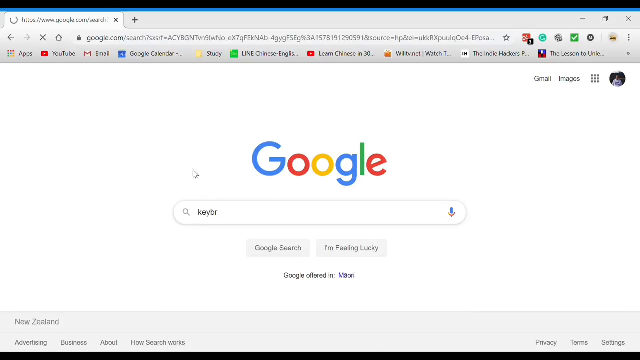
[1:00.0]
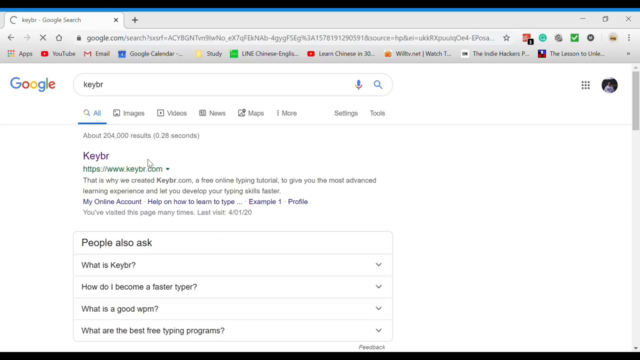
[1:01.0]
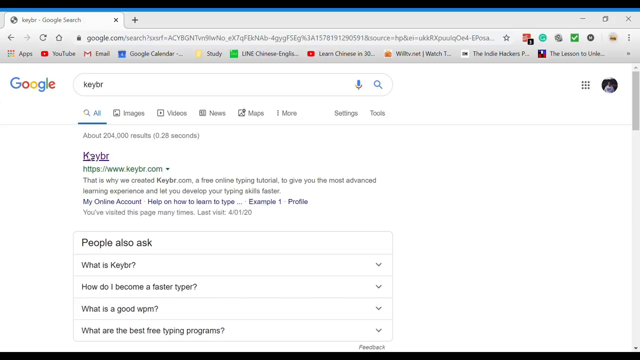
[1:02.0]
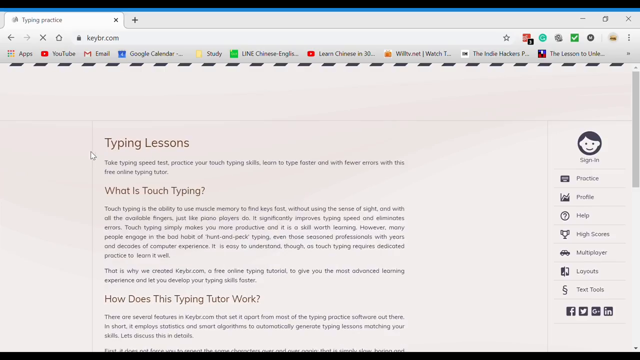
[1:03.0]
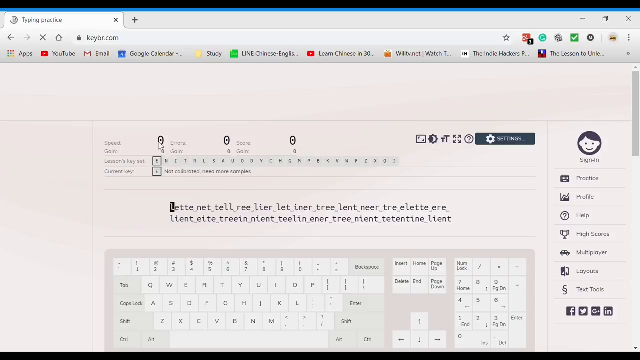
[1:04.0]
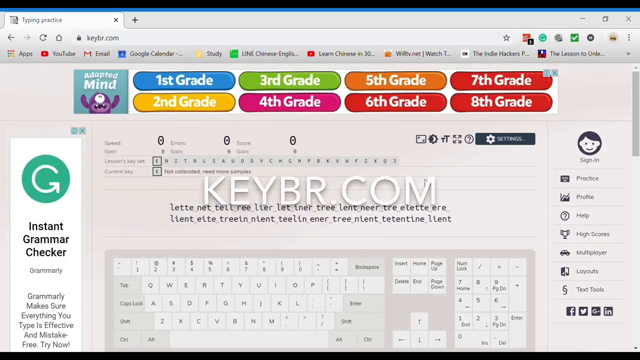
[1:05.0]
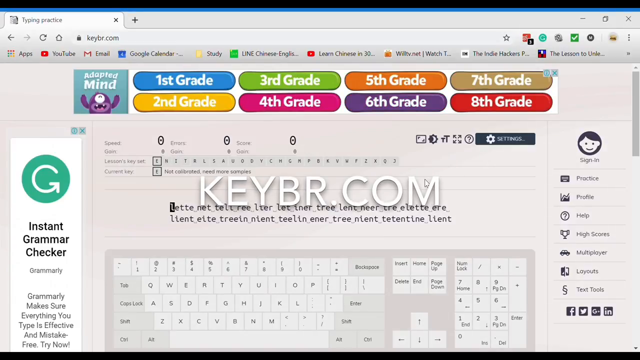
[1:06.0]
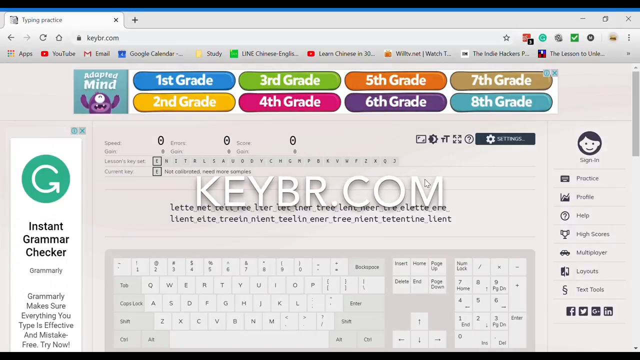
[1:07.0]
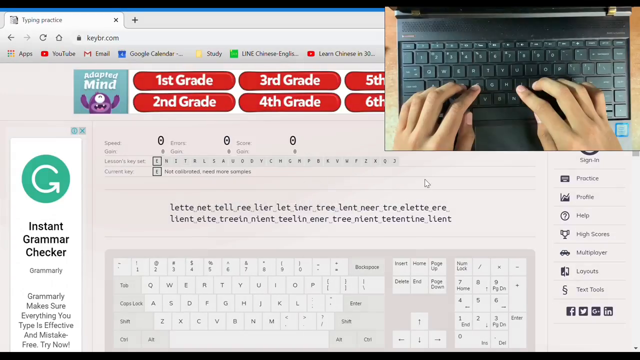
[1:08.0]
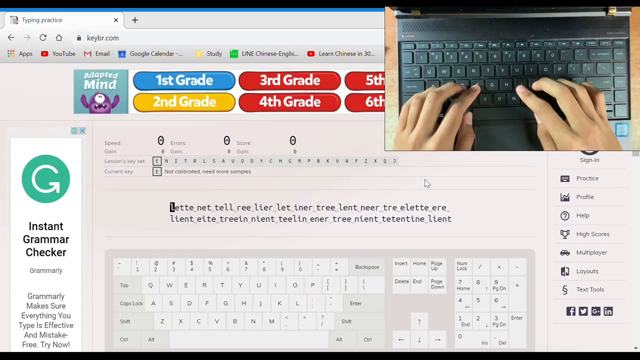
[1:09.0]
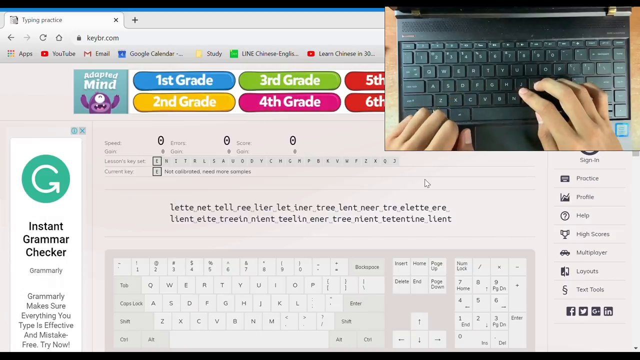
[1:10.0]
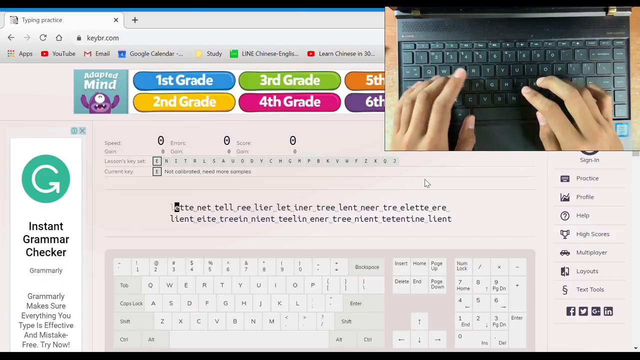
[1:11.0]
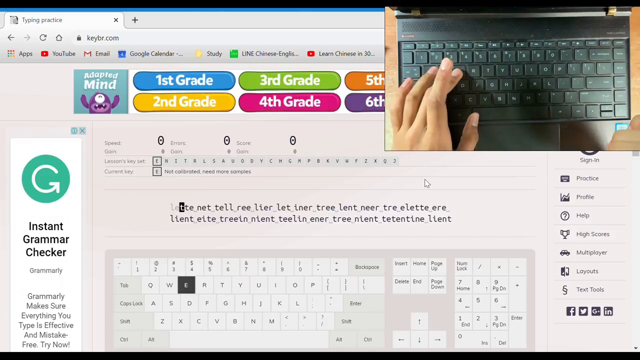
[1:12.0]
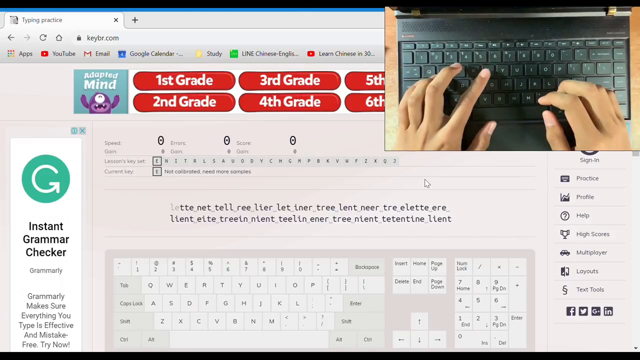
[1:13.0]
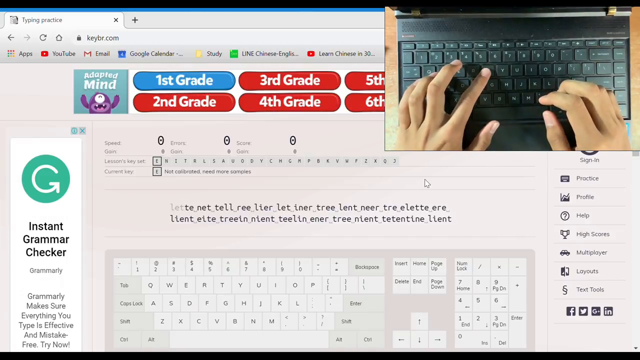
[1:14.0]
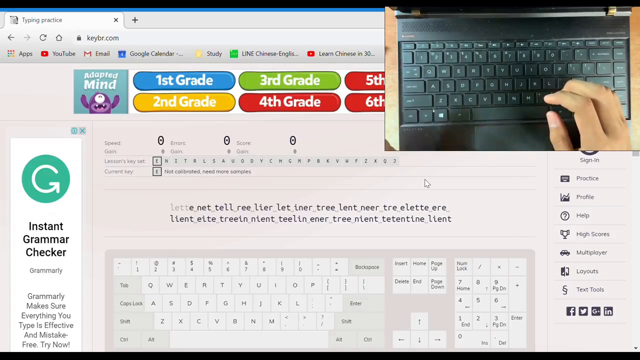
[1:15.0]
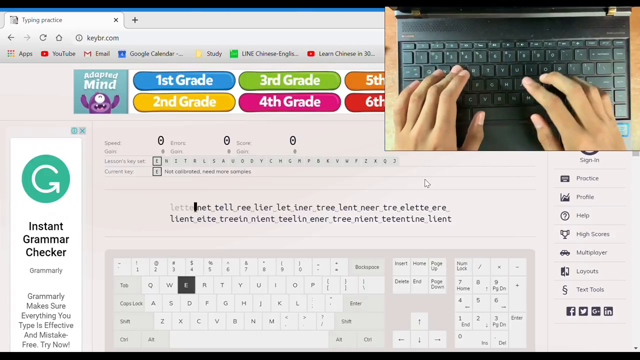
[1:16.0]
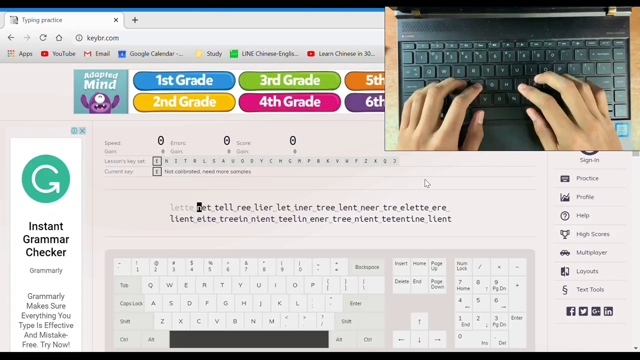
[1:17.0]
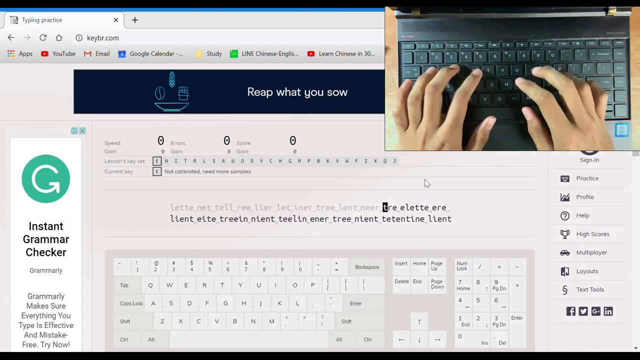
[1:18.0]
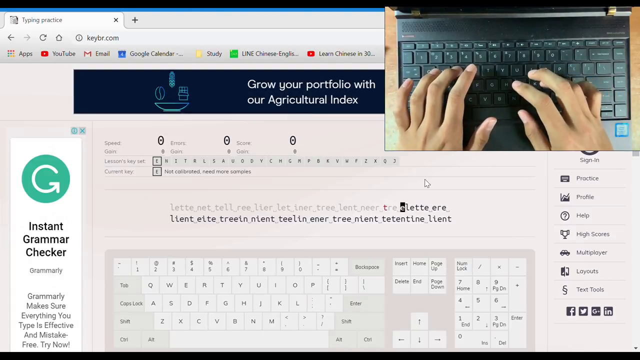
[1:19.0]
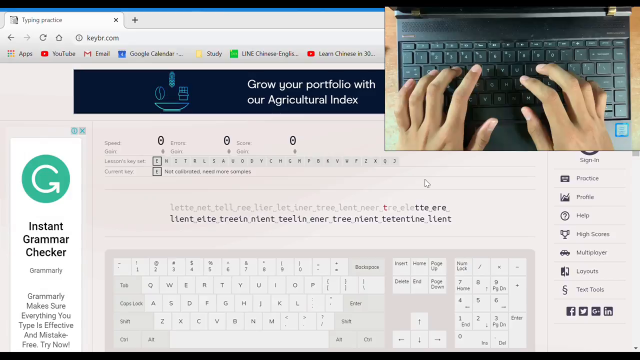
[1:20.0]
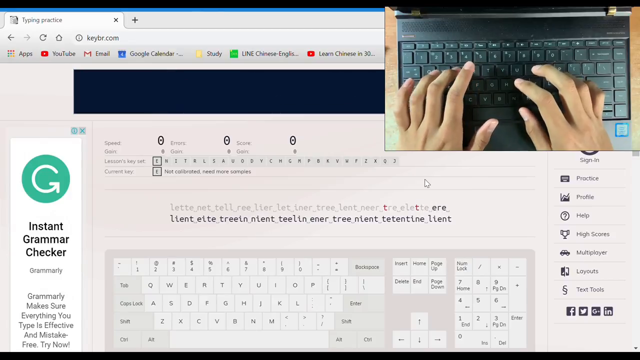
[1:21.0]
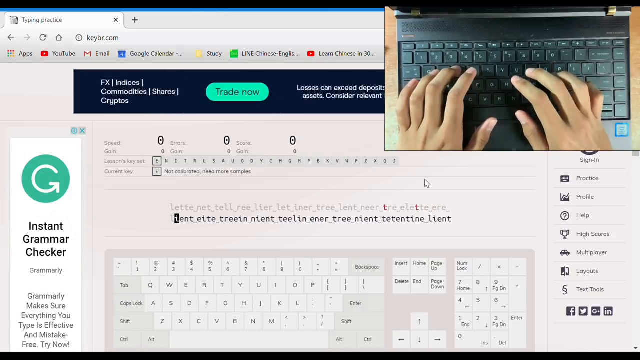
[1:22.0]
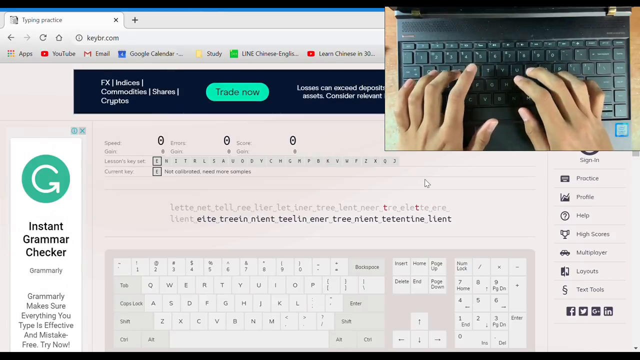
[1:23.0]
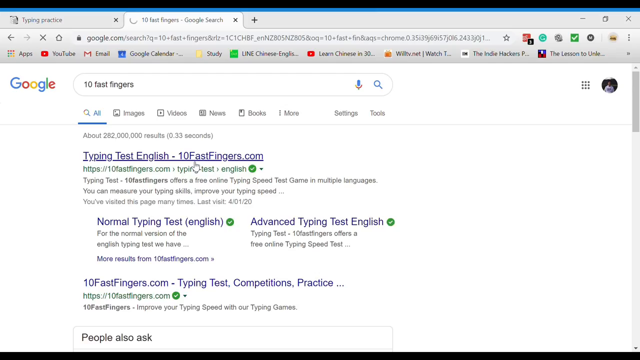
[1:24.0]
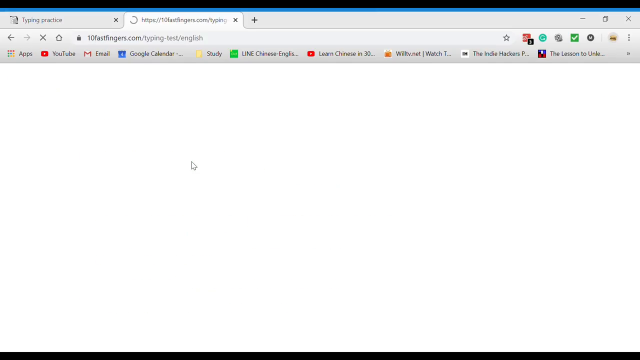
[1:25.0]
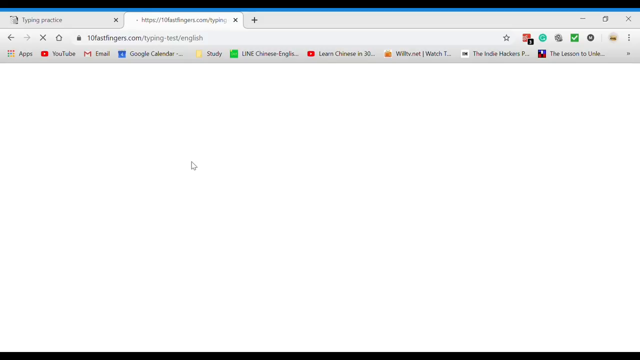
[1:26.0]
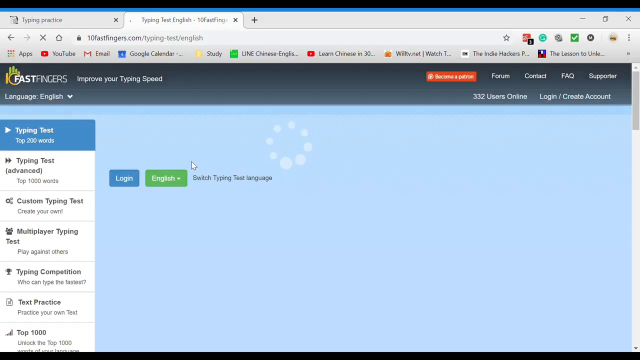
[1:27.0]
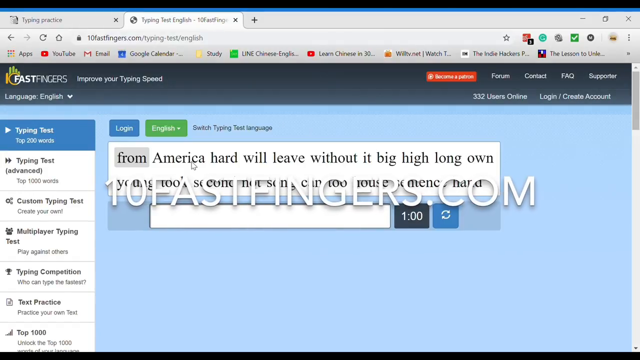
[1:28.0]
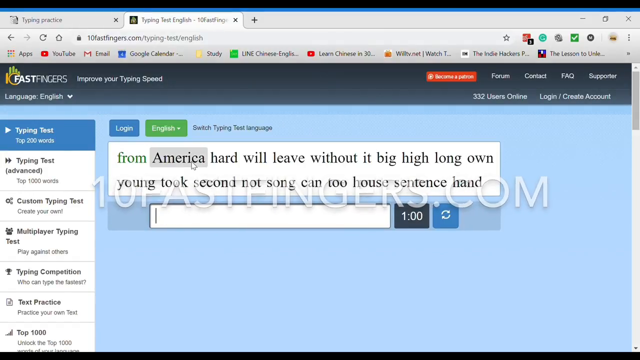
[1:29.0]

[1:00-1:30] The user enters keybr into the Google search bar and slowly moves the mouse over to the keybr website, which is to the left of the mouse position. He clicks on the website and it opens to show typing lessons. "keybr.com" shows up in the center of the screen and fades away slowly. The website shows different tests that can be done and a model of a keyboard at the bottom of the screen. In the top right of the screen, the man's hand cam from above the keyboard appears, showing him typing. He presses the same letters displayed on the website's test, his typing corresponding with the interaction on the website. He starts typing faster, with cuts through the letters he is pressing, and he types very fast. The video then cuts to another Google search of 10 fast fingers. He moves the mouse toward the website and clicks on 10fastfingers.com. Tests appear there as well, and white text in the middle of the screen says "10fastfingers.com". It fades away, and he types into the test on that website.